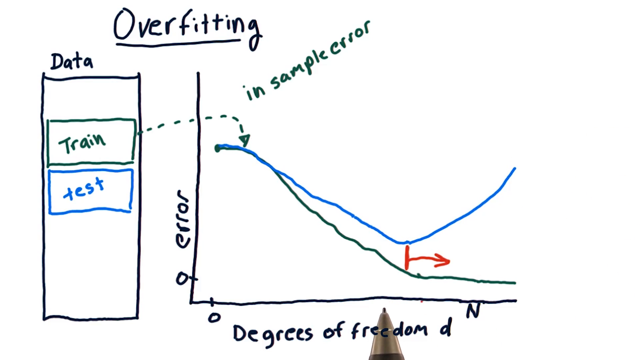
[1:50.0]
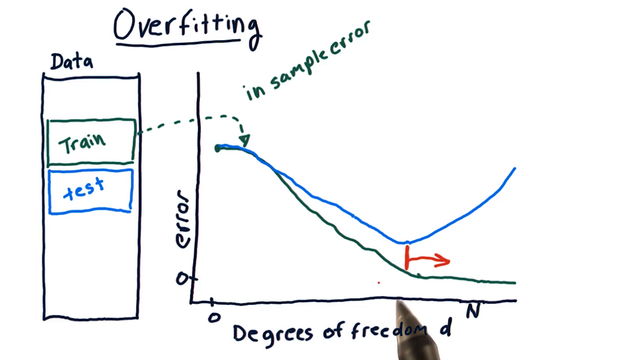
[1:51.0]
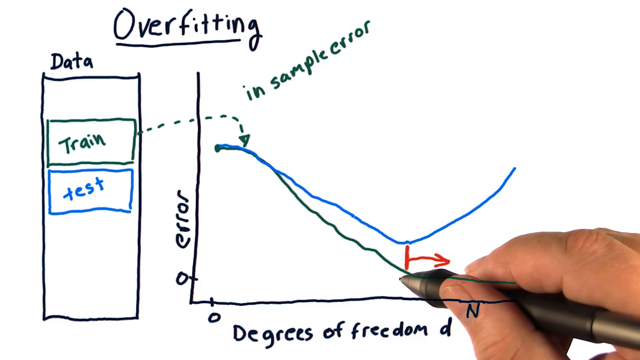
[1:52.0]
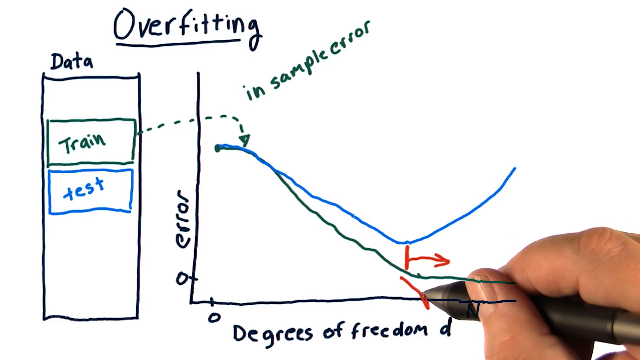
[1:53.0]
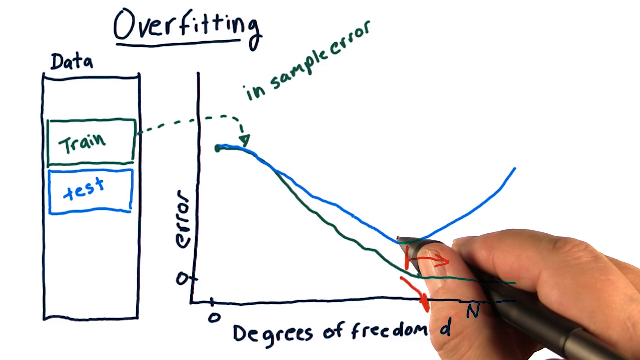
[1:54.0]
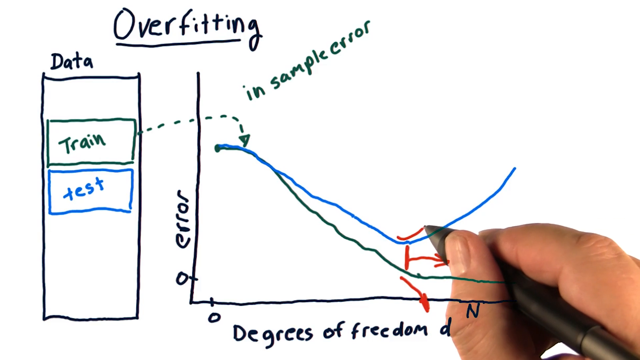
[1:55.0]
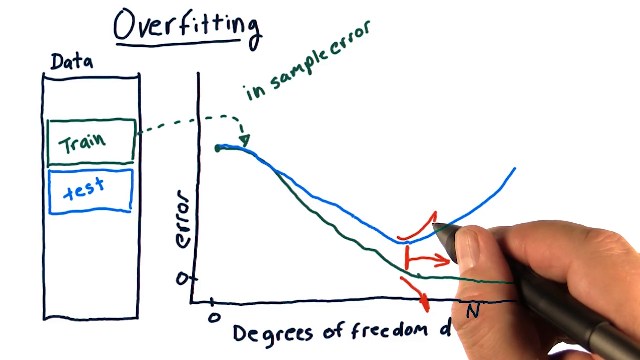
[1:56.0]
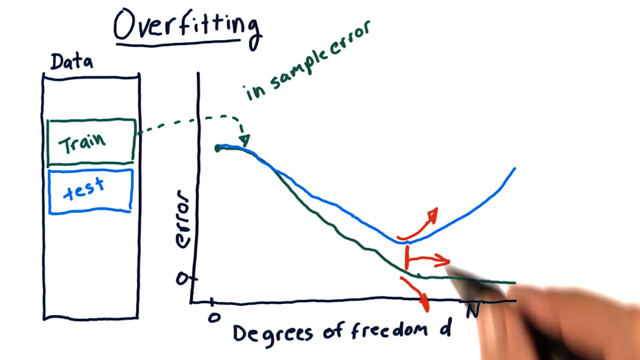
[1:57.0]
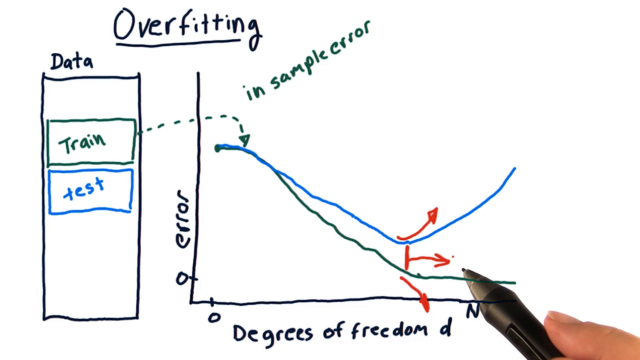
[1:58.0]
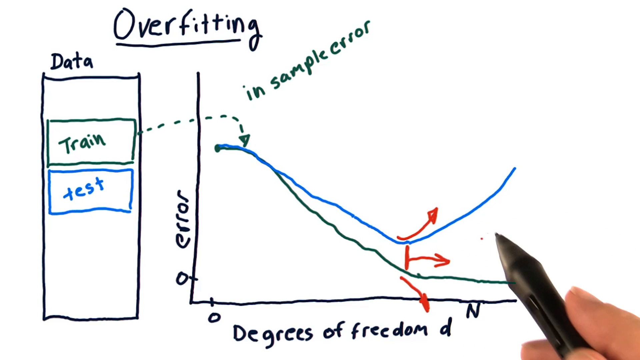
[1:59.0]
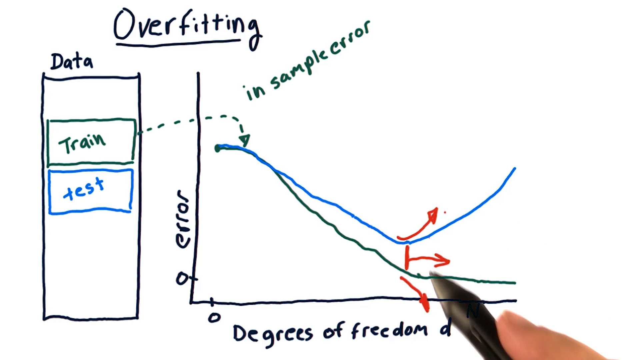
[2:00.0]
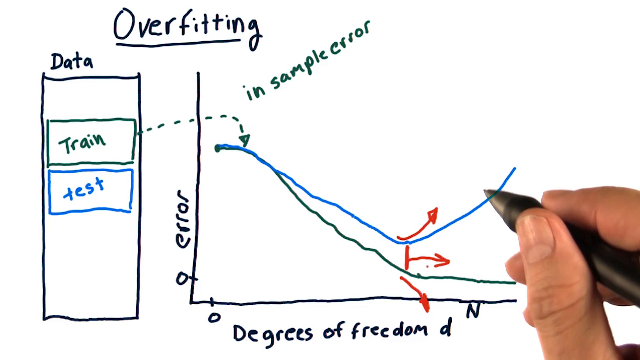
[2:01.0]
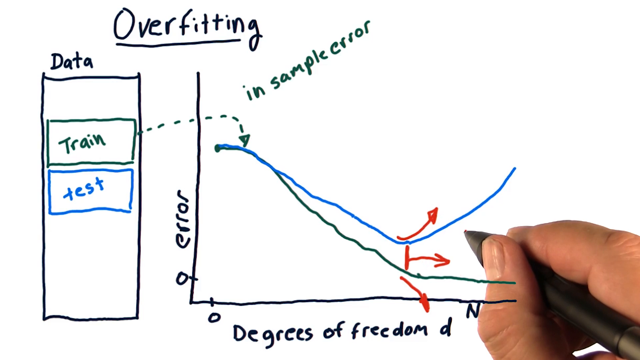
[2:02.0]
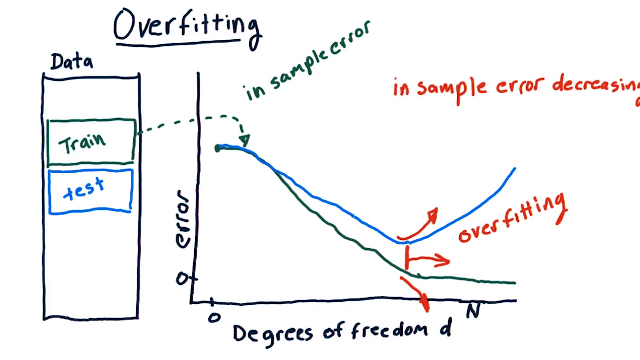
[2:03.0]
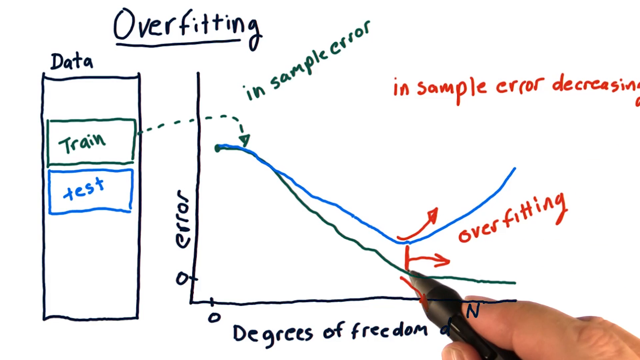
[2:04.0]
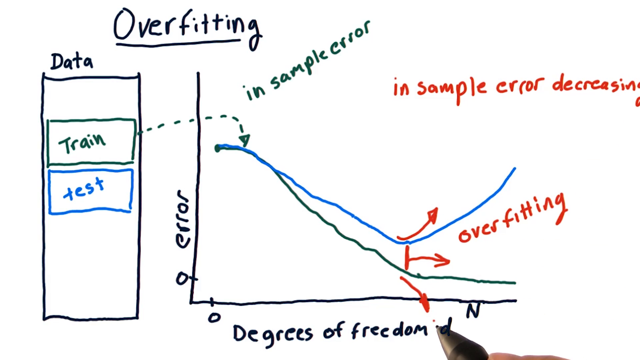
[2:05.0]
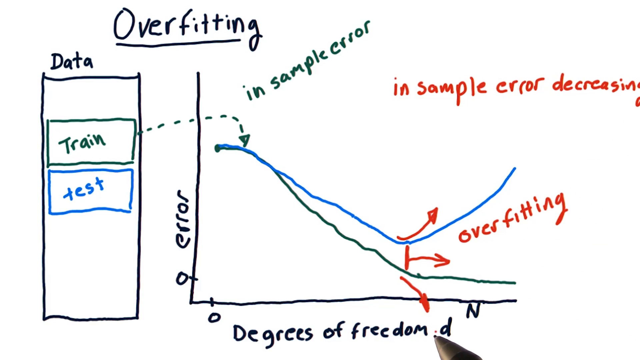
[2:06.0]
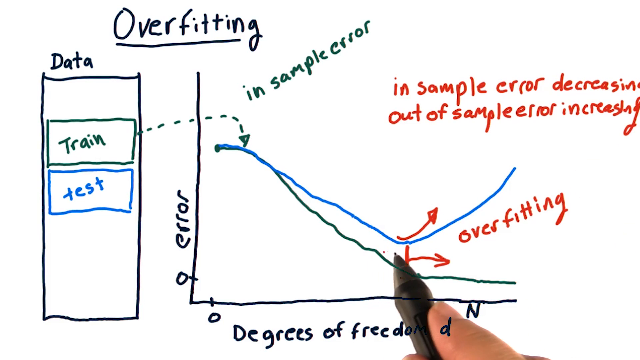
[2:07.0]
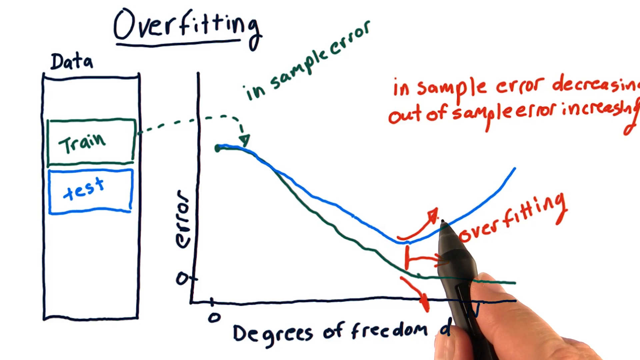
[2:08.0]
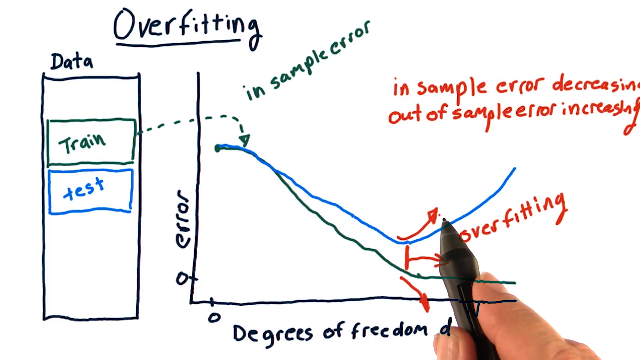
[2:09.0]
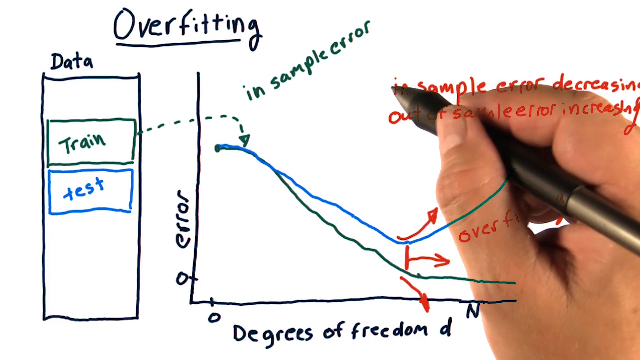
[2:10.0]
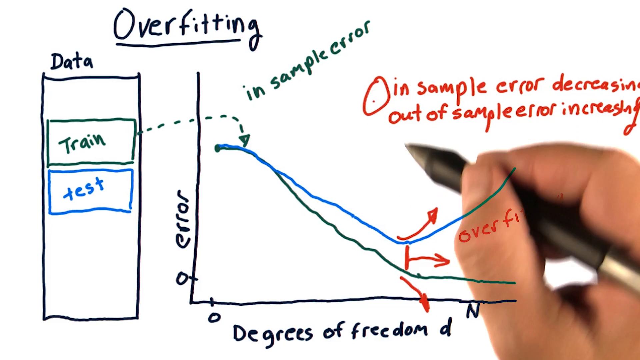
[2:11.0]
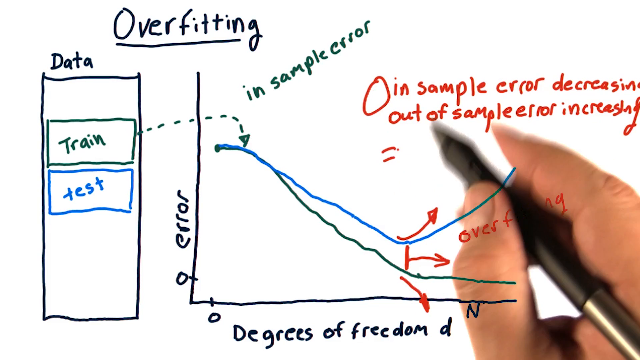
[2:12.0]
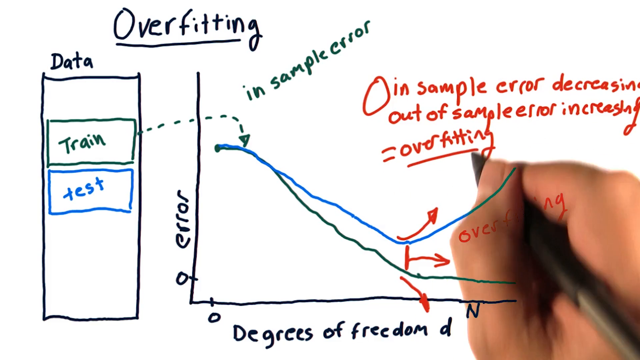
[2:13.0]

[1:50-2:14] The hand-drawn graph has the title "overfitting" with an underline at the top. On the left, "data" is written with a rectangle underneath it containing two more rectangles: a green one reading "train" and a blue one reading "test". The graph on the right has "error" on the y-axis with 0 at the bottom, and the x-axis is labeled "degrees of freedom D" with 0 on the left and N on the right. Green text on the graph reads "in-sample error", and a dotted green arrow runs from the green rectangle down toward the green line. The green line goes from the top, slopes downward and becomes horizontal at zero on the right side. A blue line starts at the same point and slopes down more shallowly, then at a certain point on the right side starts sloping back upward. A red vertical line runs from the bottom point of the blue line down to the green line, with a red right arrow. A right hand holding a pen seems to be drawing red lines: at the red line with the right arrow, it appears to draw a downward arrow toward the right for the green line, then an upward arrow toward the right for the blue line. It focuses on this area and the difference between the blue and green lines, makes a counterclockwise circle around the area, and writes "overfitting" to its right. Red text reading "in-sample error decreasing" appears at the top right. The pen goes back to the downward right arrow and then the upward right arrow of the green and blue lines. Then text reading "out-of-sample error increasing" appears at the top right below "in-sample error decreasing". The right hand draws a circle around these two red texts, writes "=" below them, then writes "overfitting" and underlines it.